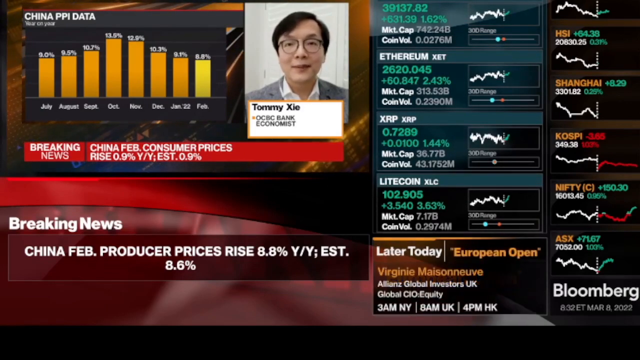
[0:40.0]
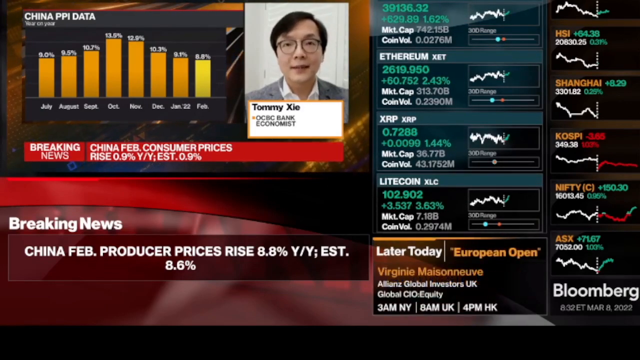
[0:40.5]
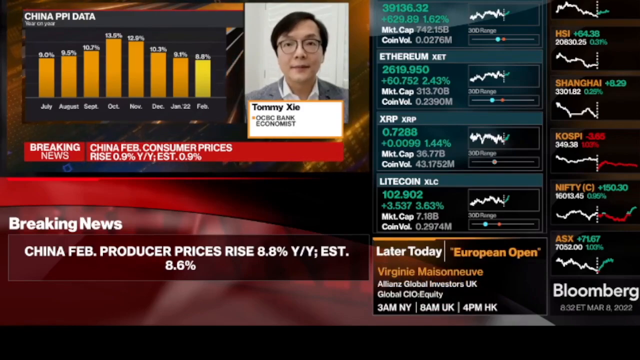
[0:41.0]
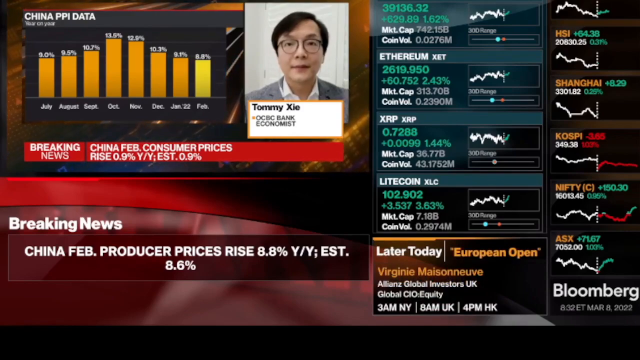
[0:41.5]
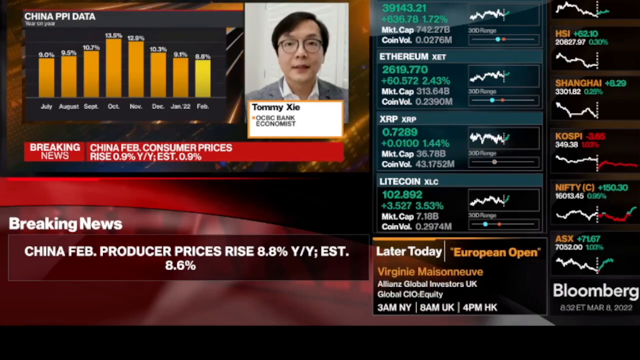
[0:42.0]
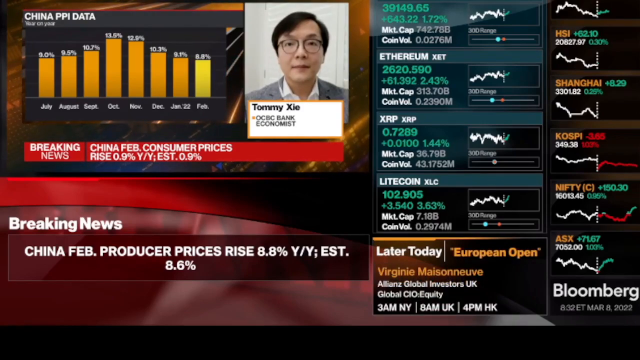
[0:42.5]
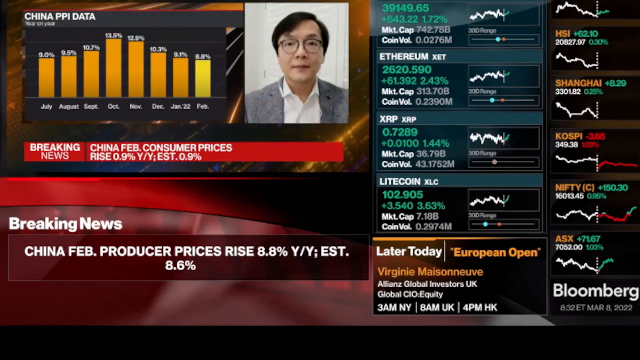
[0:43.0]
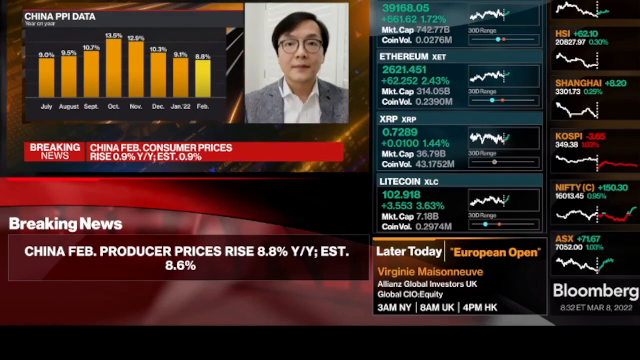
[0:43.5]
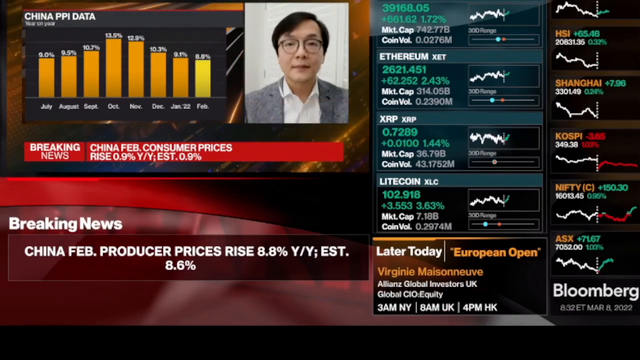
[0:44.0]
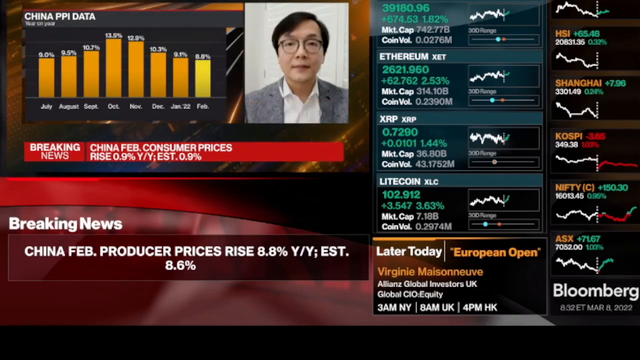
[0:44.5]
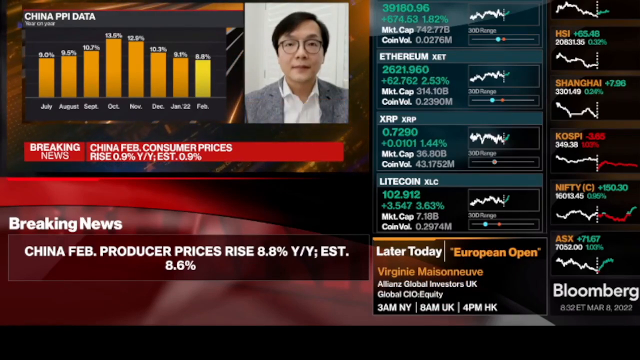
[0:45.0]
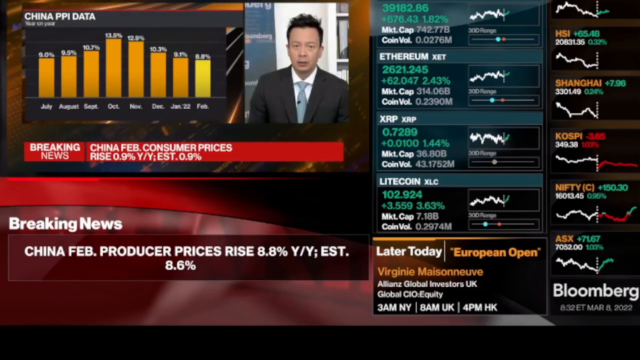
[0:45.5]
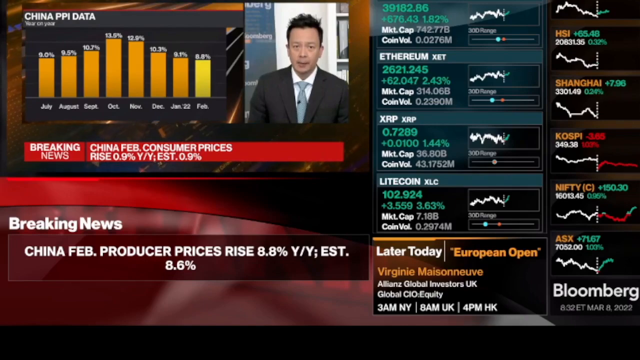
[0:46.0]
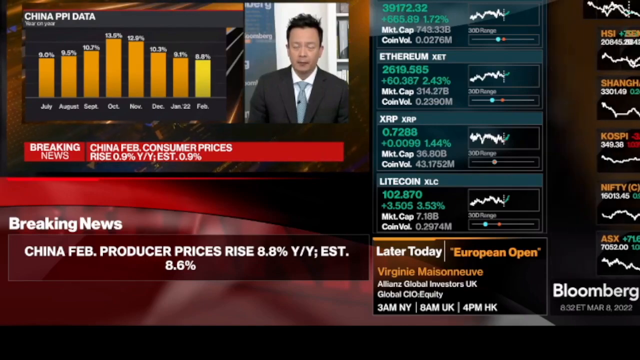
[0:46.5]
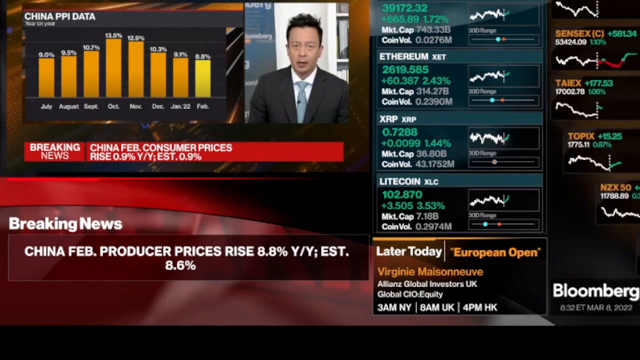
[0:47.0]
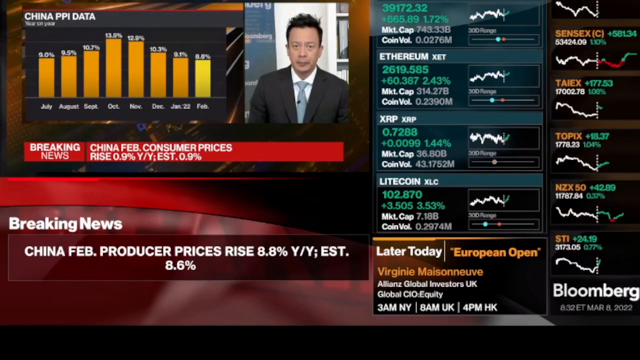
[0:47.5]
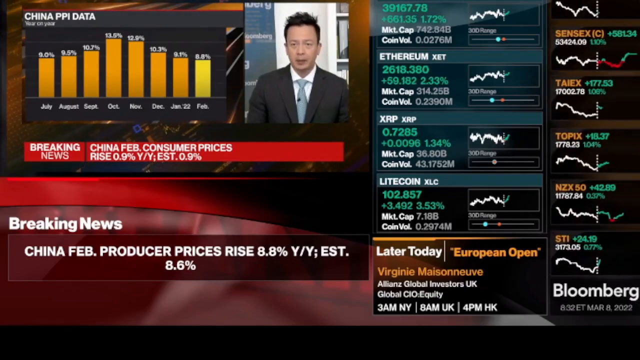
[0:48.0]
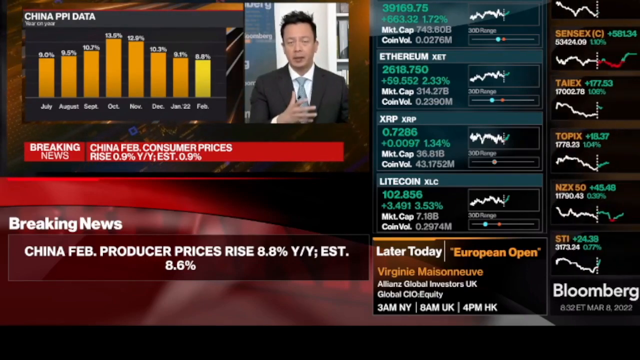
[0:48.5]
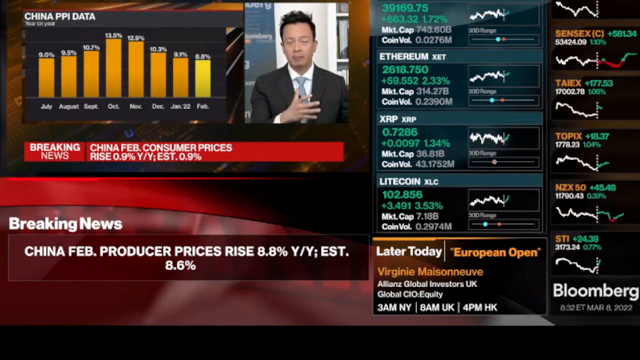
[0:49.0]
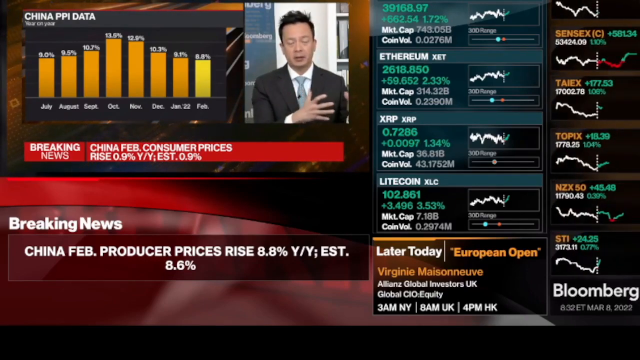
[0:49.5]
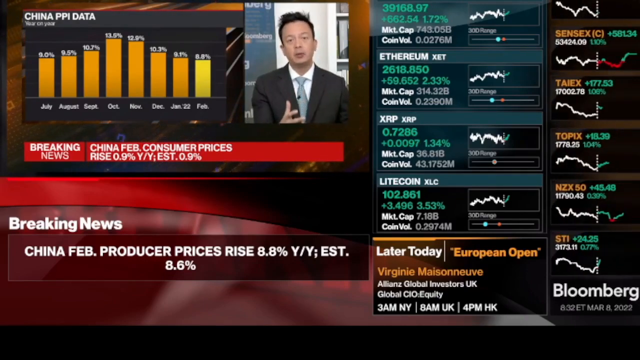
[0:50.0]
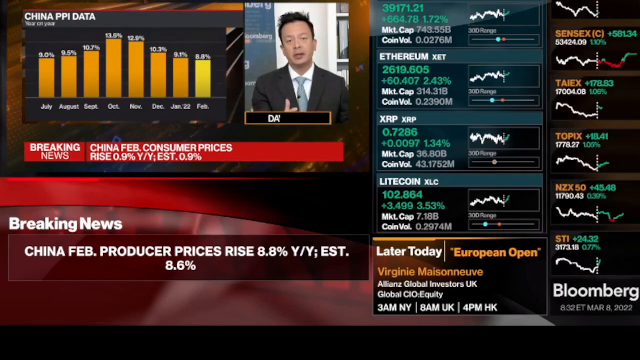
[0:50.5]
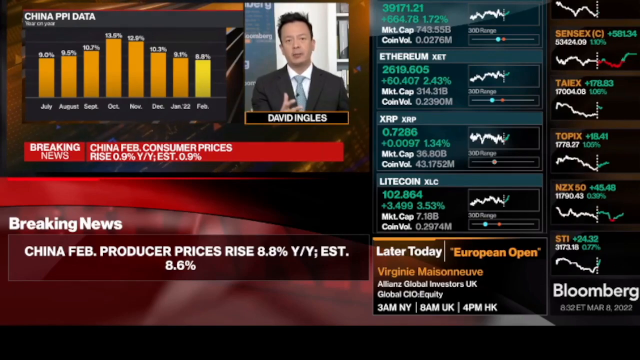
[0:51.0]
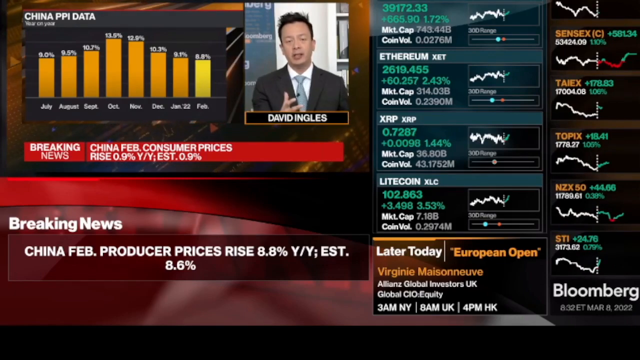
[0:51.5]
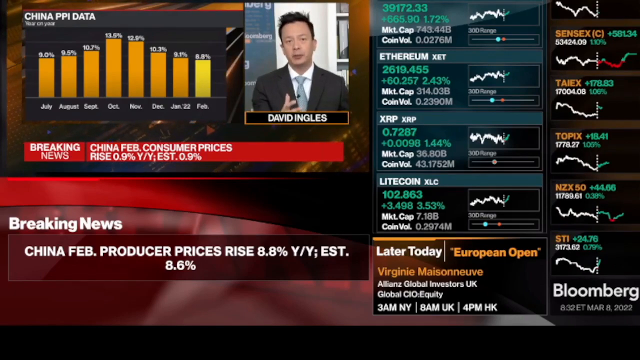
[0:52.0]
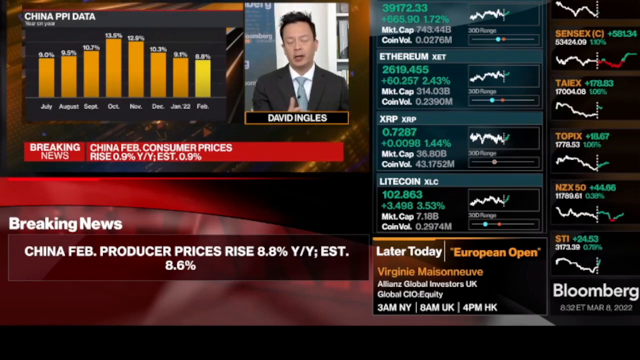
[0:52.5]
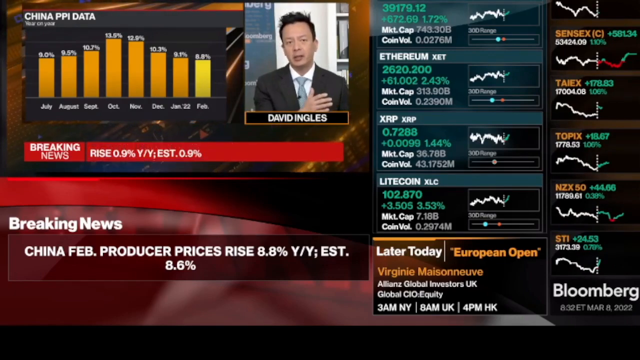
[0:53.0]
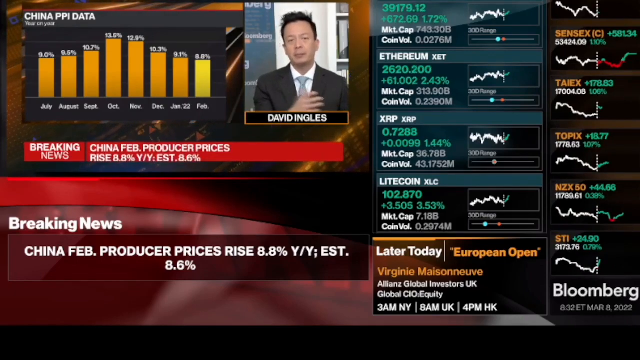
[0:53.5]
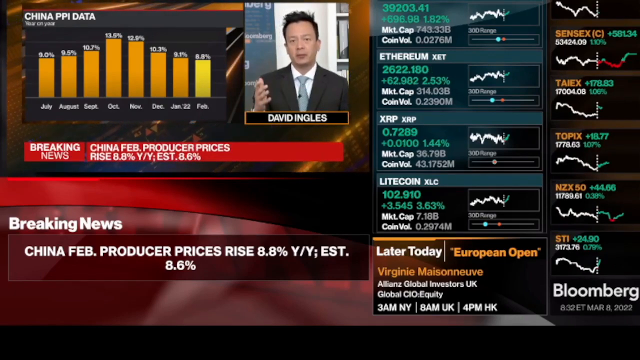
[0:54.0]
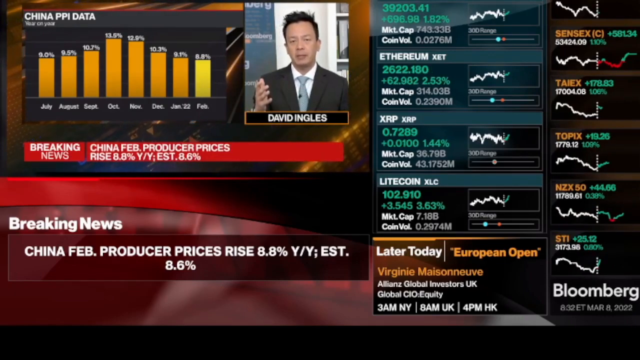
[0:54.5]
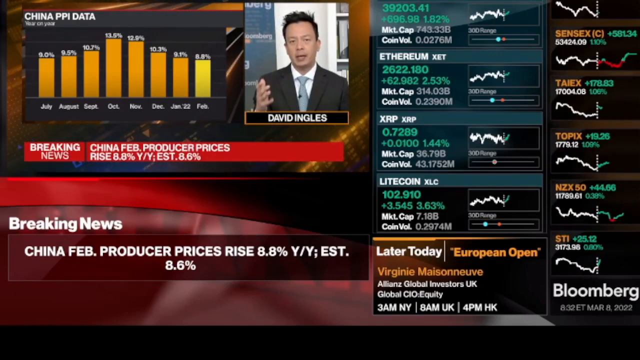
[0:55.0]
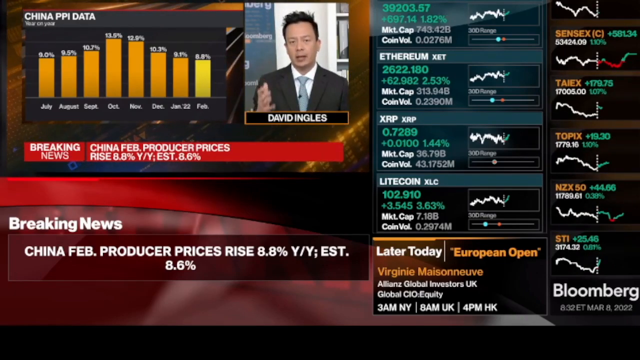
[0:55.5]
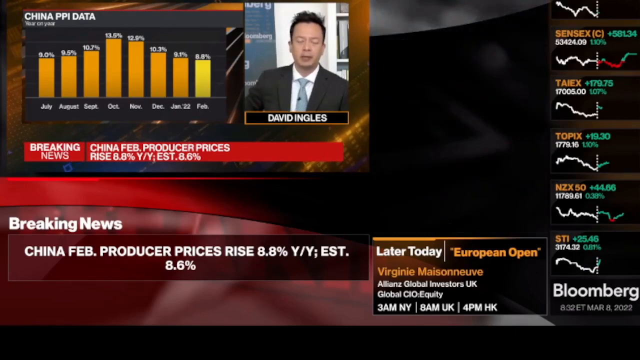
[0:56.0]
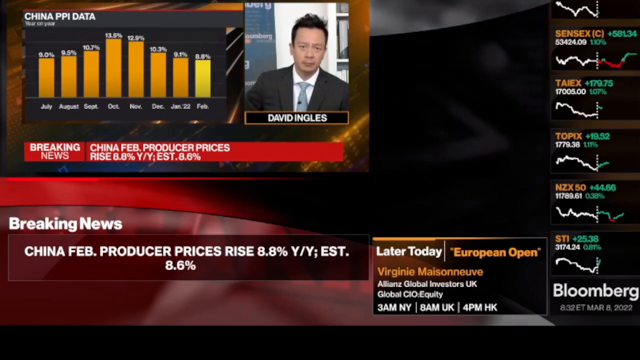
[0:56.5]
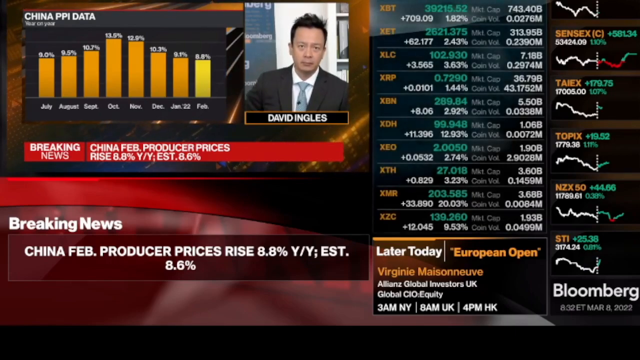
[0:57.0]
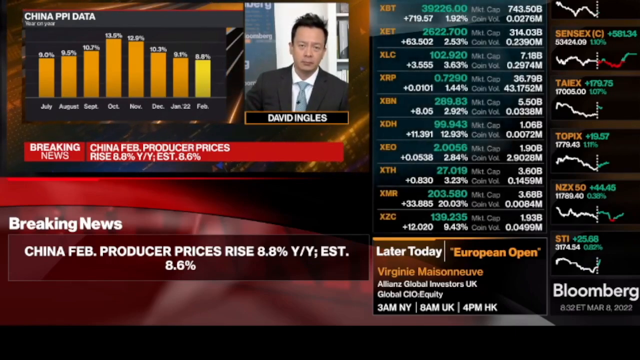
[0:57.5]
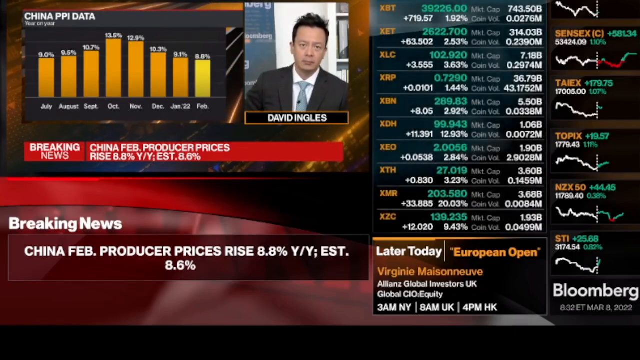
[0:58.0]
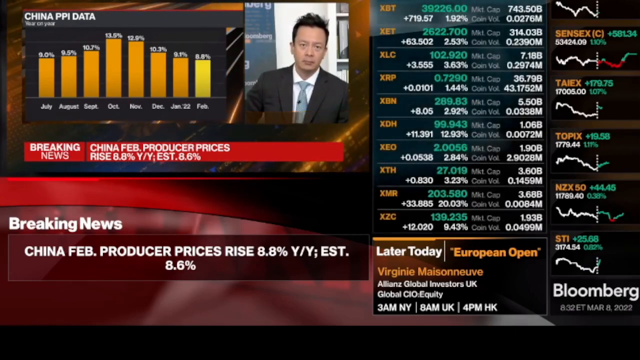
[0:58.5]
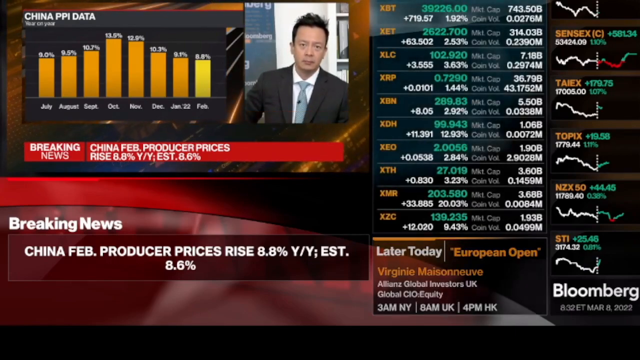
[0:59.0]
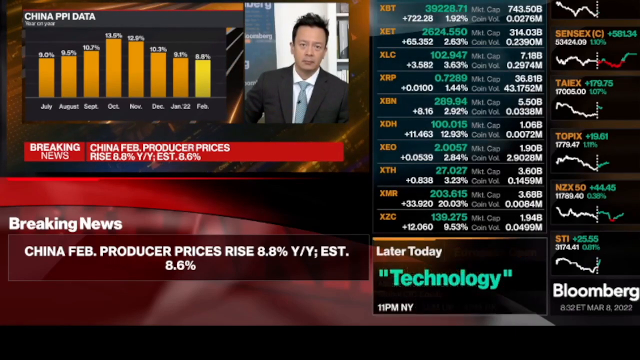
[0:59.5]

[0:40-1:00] The charts on the right side of the screen now show statistics for different currencies, including Ethereum and Lite coin. The stocks on the right side change often, showing new ones that vary in recent gains and losses. A new reporter named David Ingles is shown next to the bar graph, possibly giving his opinion on the Chinese PPI data. David looks to be in a news studio, with different posters behind him, and he wears a suit. Under each stock shown is a line with past and current statistics, and between some of these lines there is a line marking the present or the very recent past.